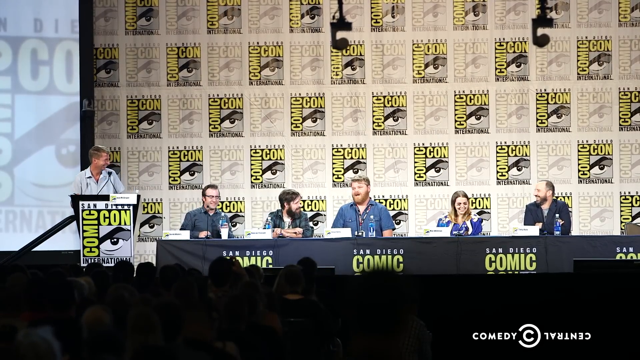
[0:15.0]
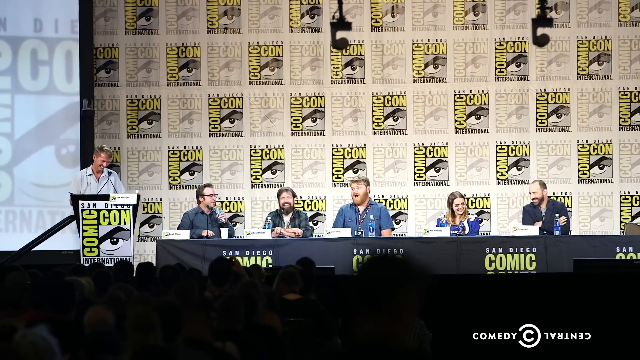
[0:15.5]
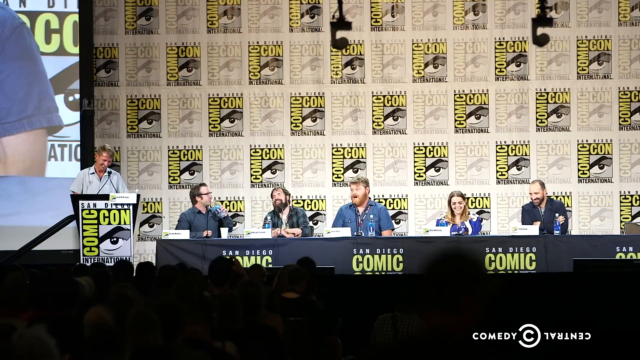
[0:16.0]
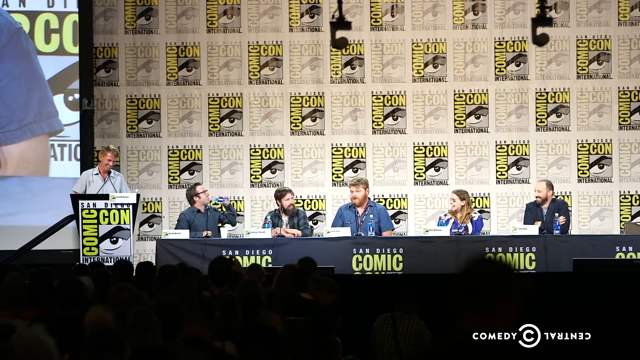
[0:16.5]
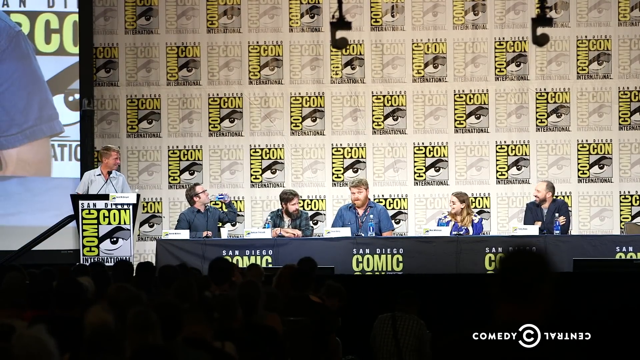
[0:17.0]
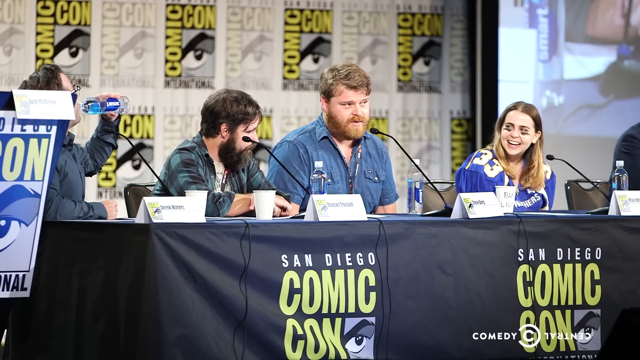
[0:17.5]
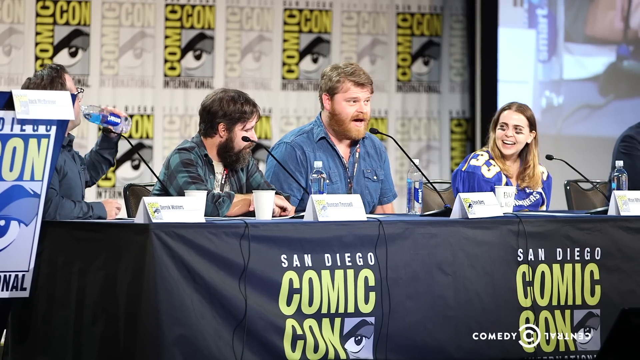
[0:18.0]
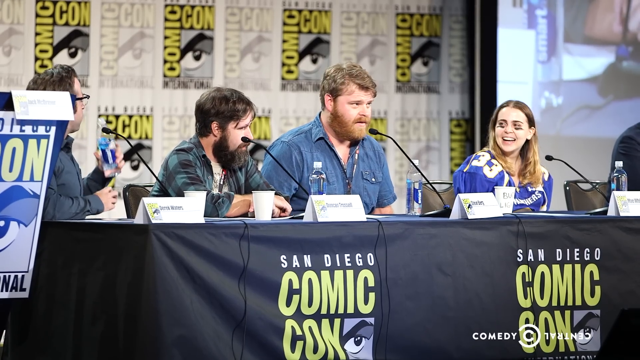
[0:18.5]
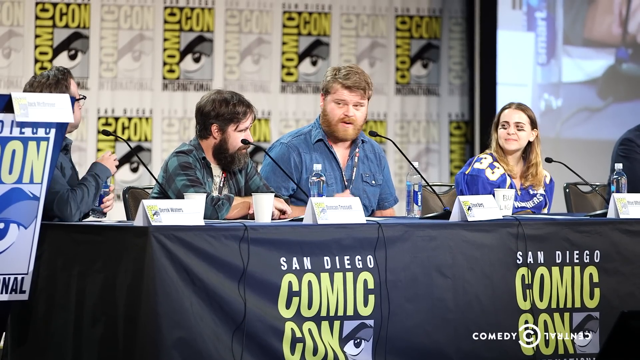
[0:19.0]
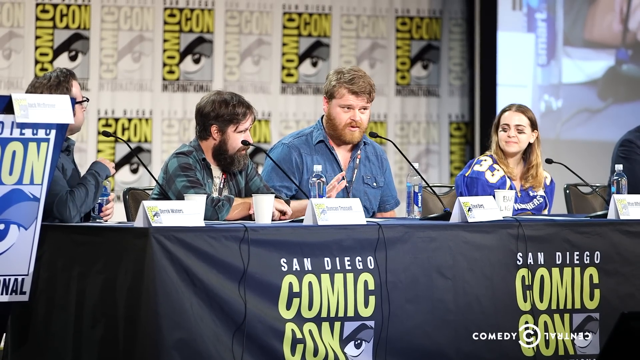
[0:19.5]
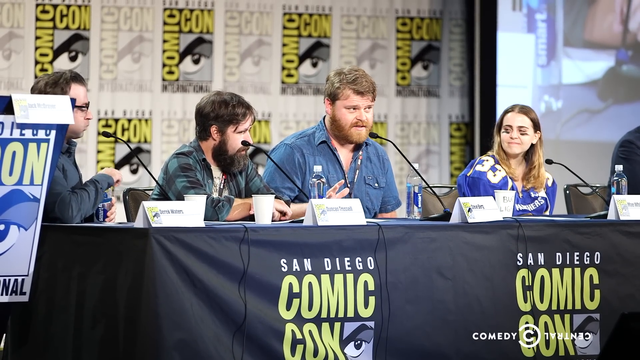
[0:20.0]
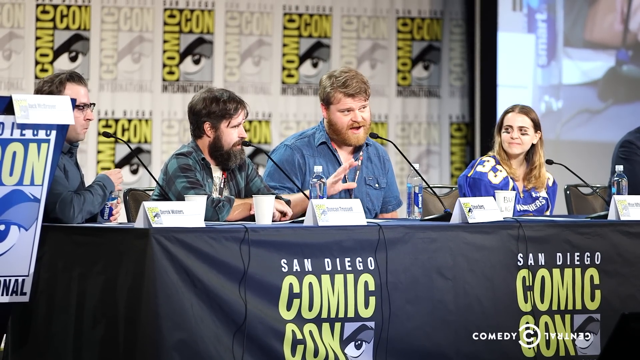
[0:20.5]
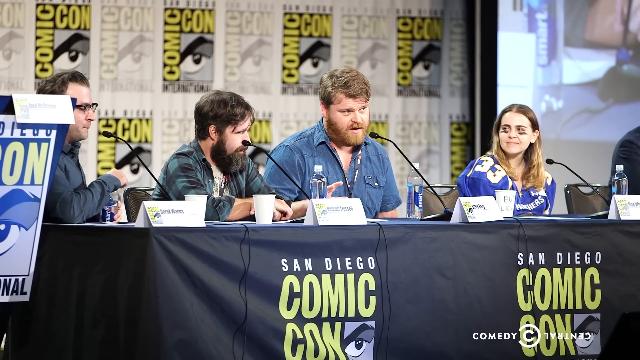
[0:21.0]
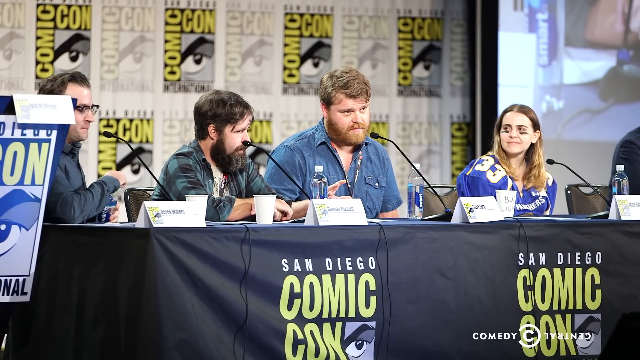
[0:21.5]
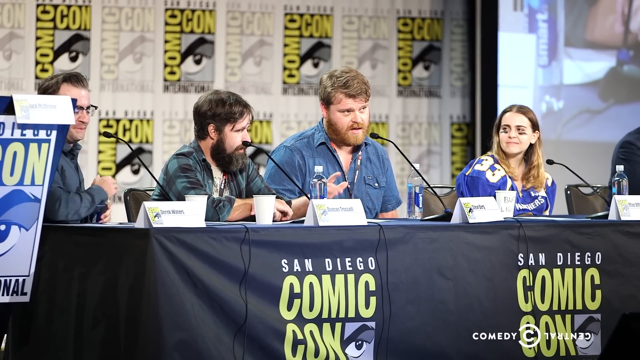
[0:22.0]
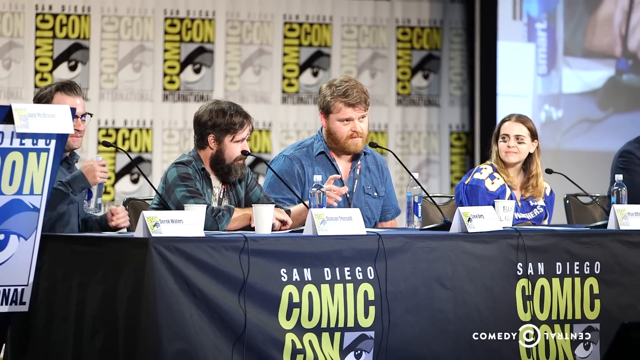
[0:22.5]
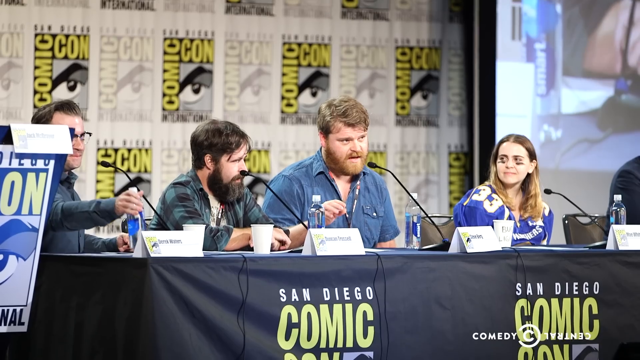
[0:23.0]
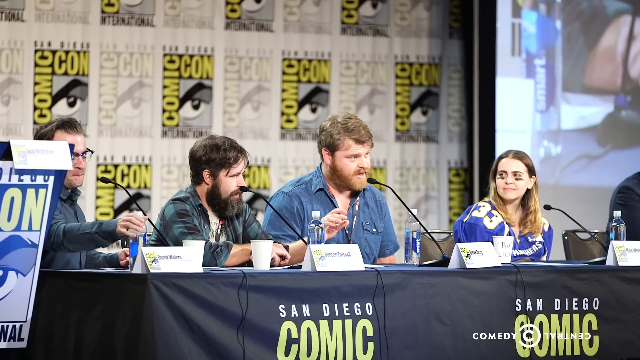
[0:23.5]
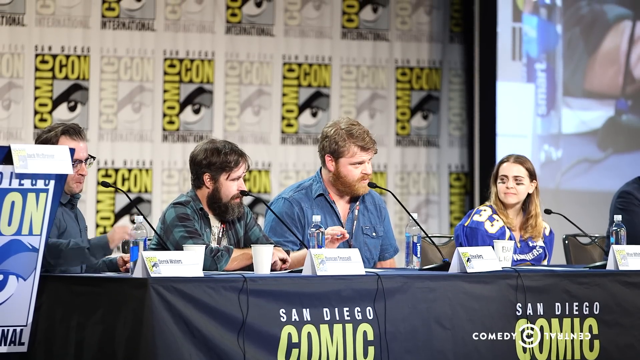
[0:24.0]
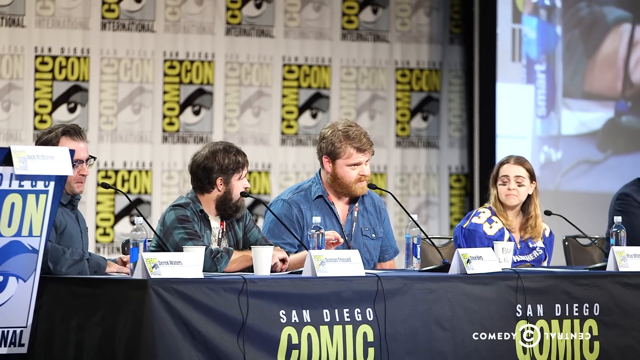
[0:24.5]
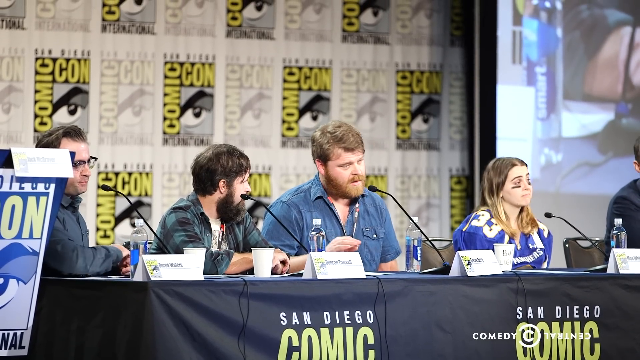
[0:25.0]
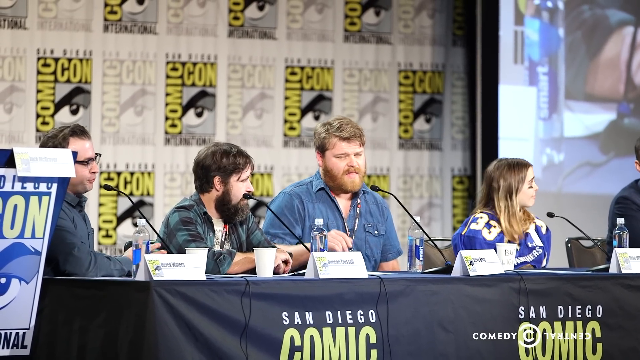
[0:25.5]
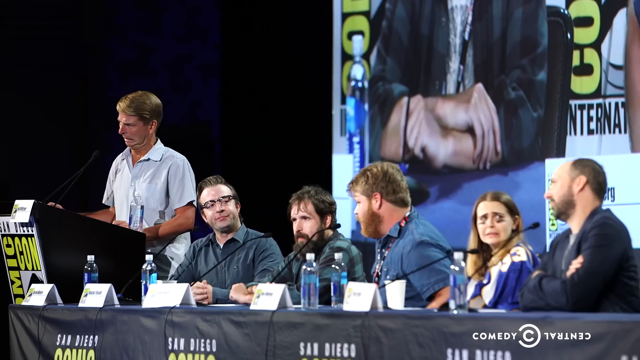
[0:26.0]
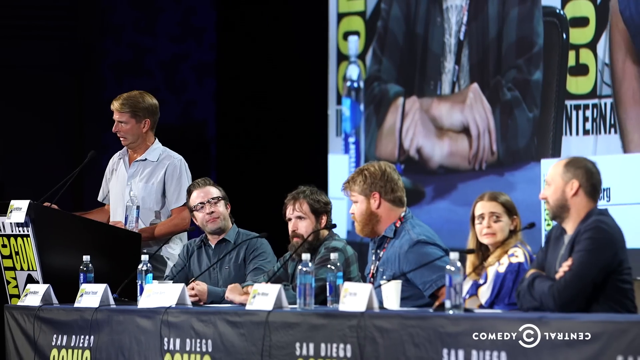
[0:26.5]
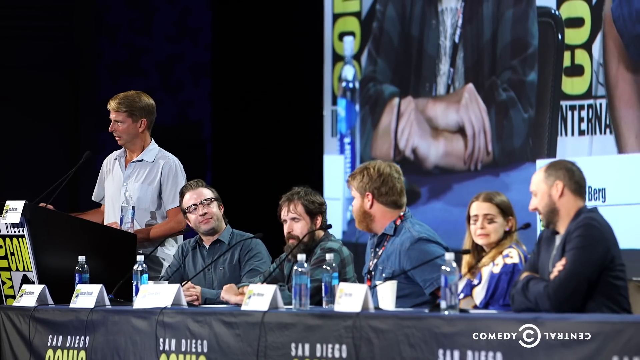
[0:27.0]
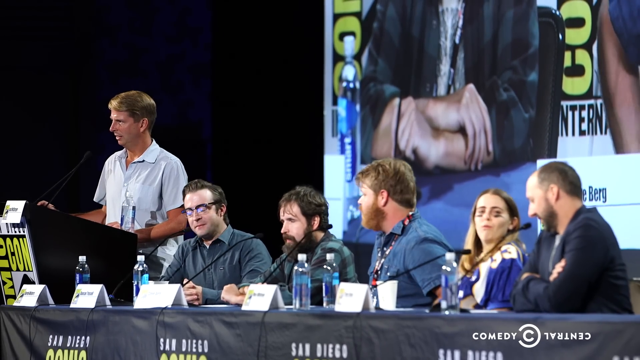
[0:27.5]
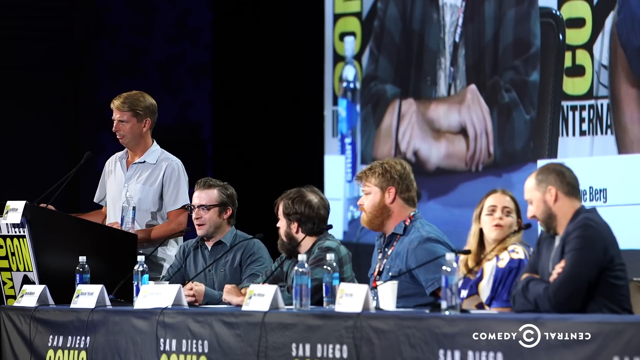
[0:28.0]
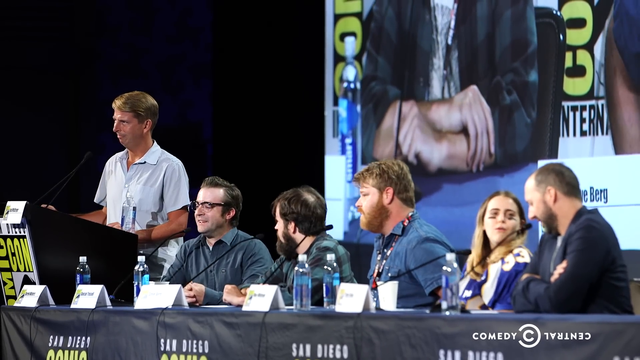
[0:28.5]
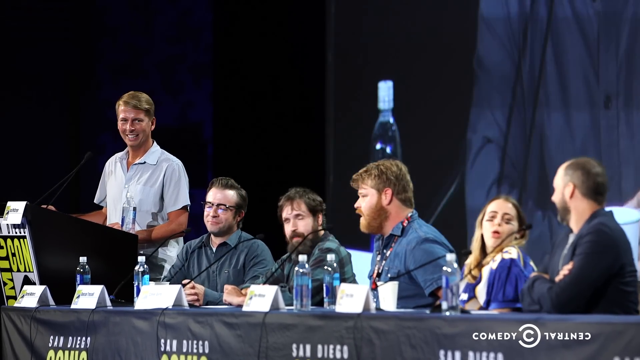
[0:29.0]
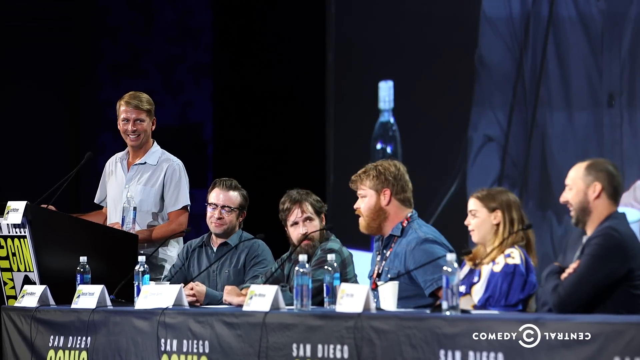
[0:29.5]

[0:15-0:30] The scene starts on the wide shot, with Kenneth on the right side, then three men, a woman and another man. The woman wears a blue jersey with the number 33 on the shoulder pads, and she has football-style black under her eyes. The other man is balding on top, with black hair and a beard. The man in the middle has a big reddish beard and somewhat blonde hair. Next to him on the left side is a man with a big black beard and black, somewhat shaggy hair, wearing a flannel shirt. Next to him, further to the left, is a clean-shaven man with short slicked-back hair and black glasses, and then there is the man from 30 Rock. The man in the middle does most of the talking while the others listen intently to him. The woman laughs. The man looks over, then looks at the crowd and mostly talks to the crowd, waving the fingers of his right hand around as he talks; he then moves his hand off the table and seems to rub his leg. The woman looks to the man on her right and starts talking. The table in front of them is black, with all their names on little pieces of plastic, and there is a little plastic cup, with plastic water bottles covering the table. A black tarp says "San Diego comic-con" four times across it from left to right, with "comic" and "con" under it, and there is a little square that looks like a close-up of a drawn eye.